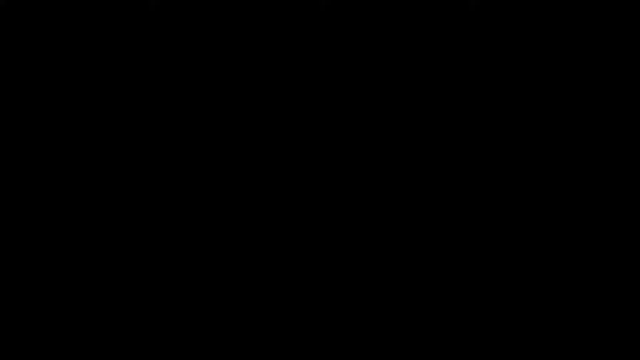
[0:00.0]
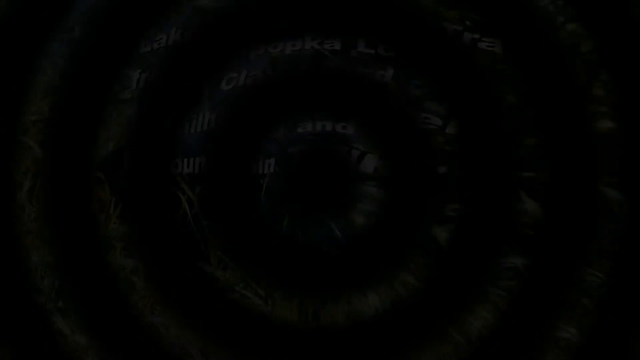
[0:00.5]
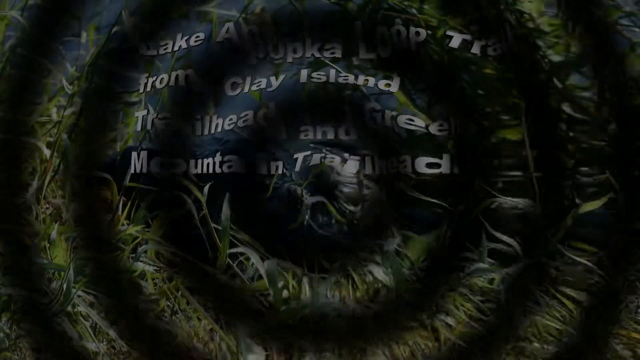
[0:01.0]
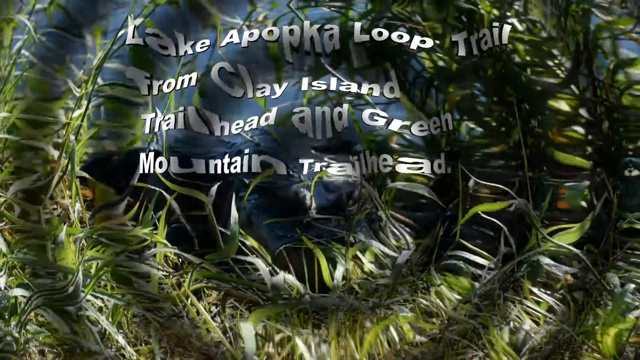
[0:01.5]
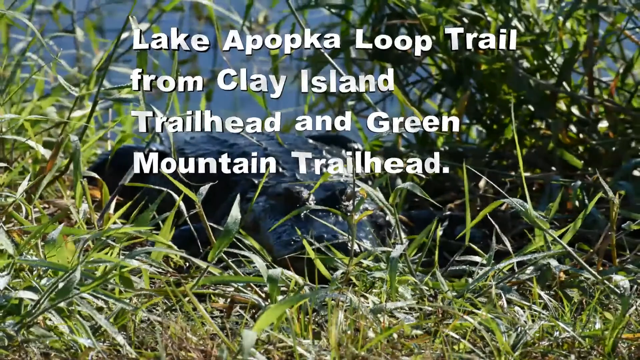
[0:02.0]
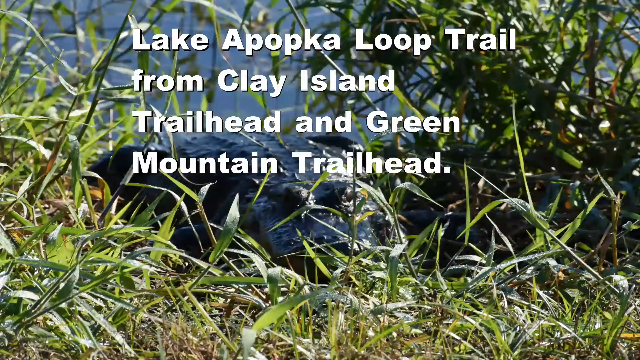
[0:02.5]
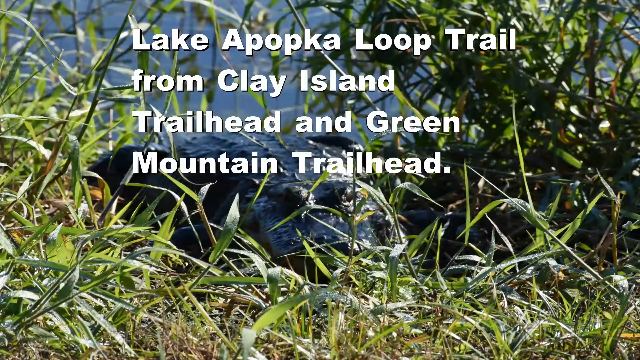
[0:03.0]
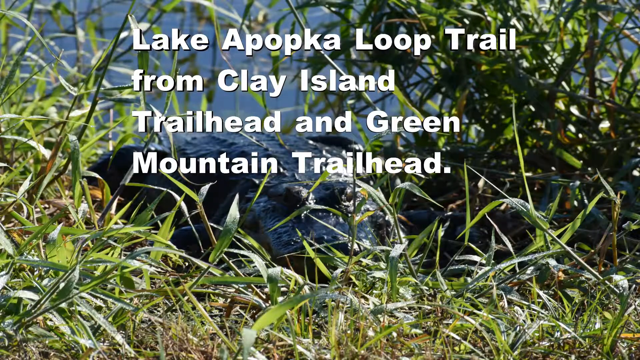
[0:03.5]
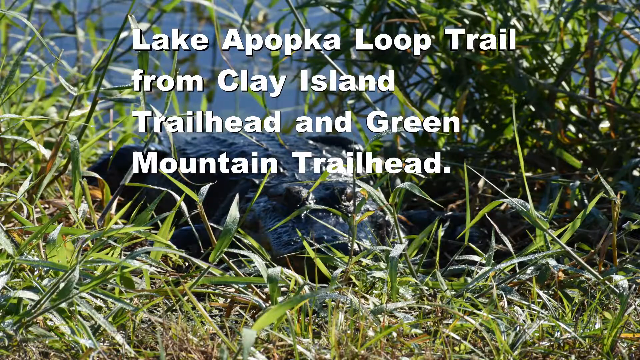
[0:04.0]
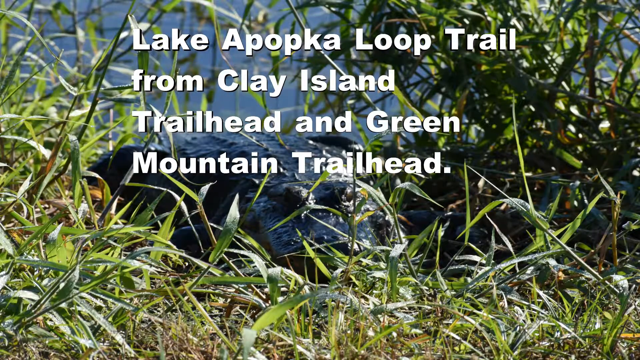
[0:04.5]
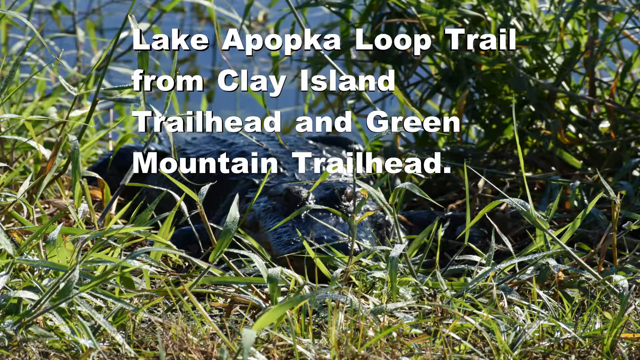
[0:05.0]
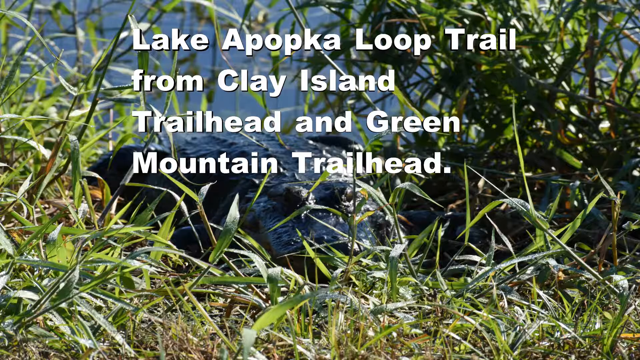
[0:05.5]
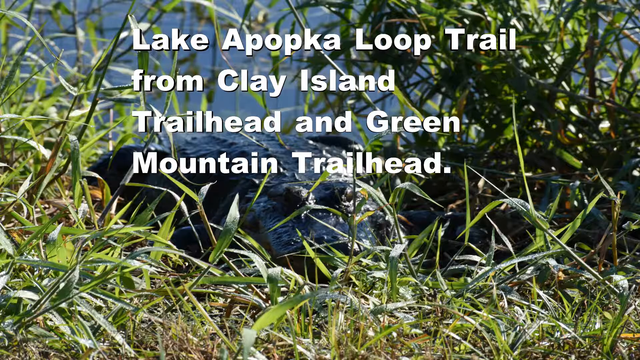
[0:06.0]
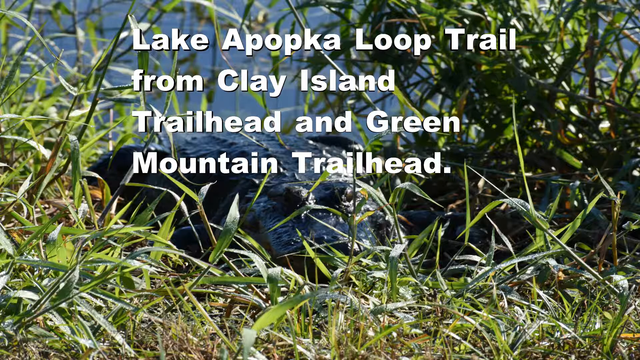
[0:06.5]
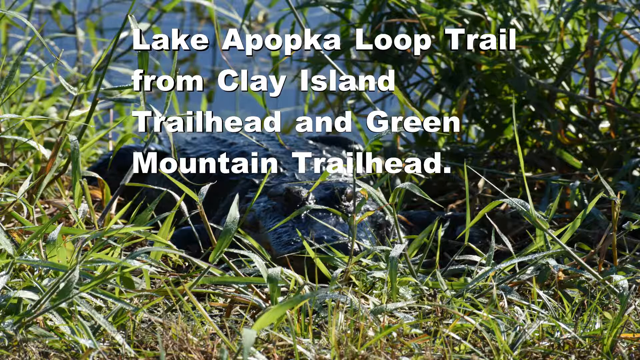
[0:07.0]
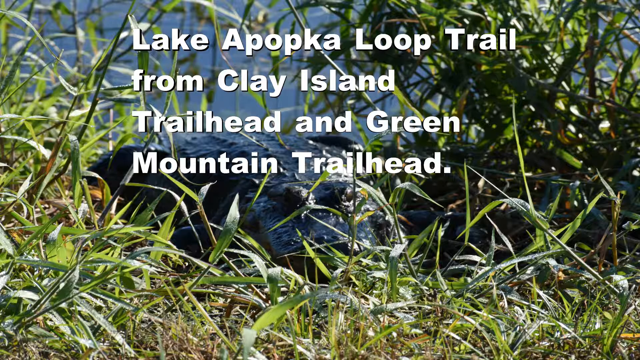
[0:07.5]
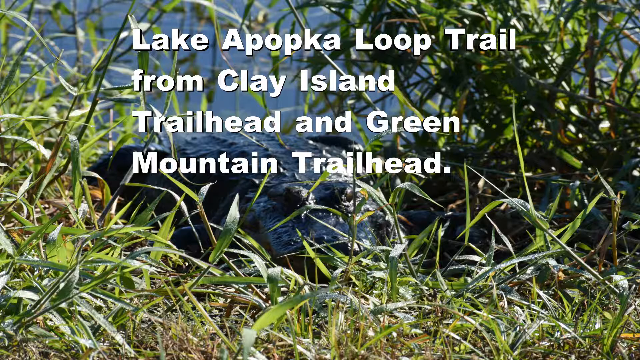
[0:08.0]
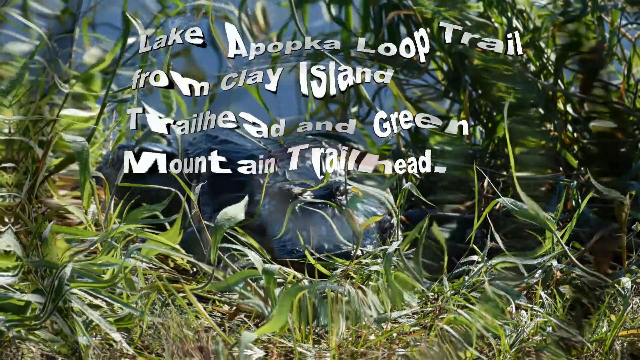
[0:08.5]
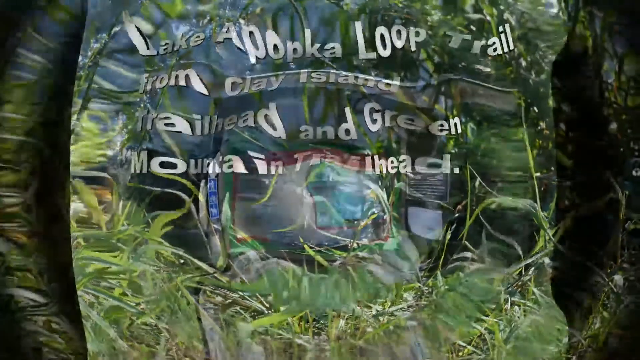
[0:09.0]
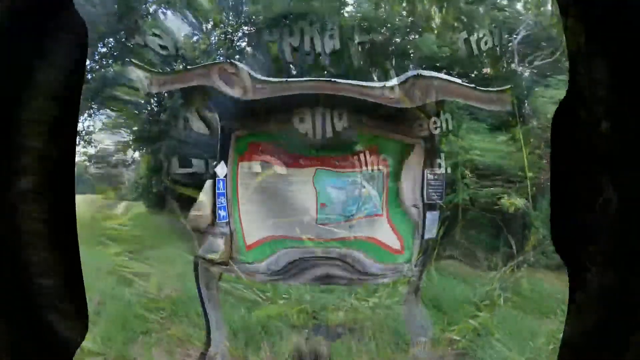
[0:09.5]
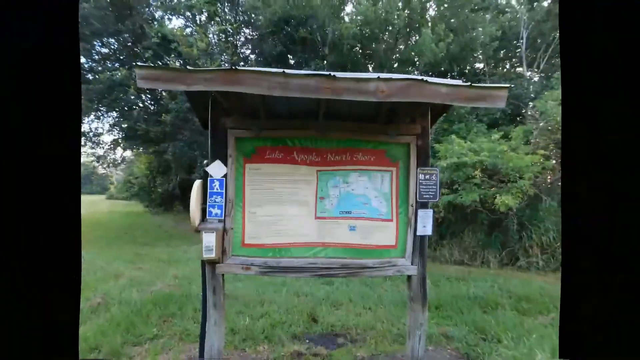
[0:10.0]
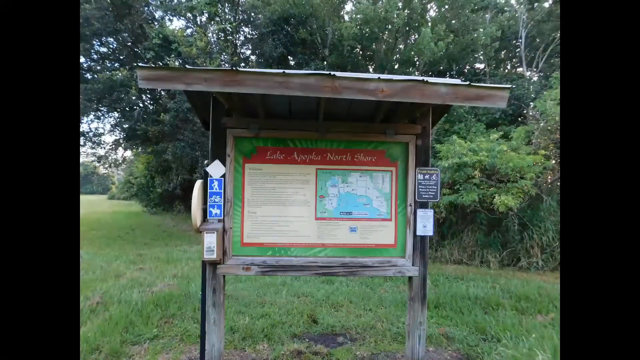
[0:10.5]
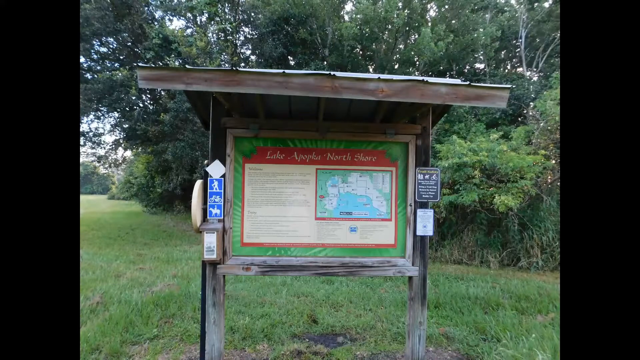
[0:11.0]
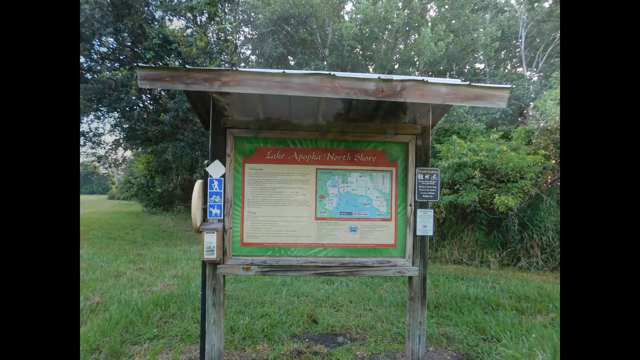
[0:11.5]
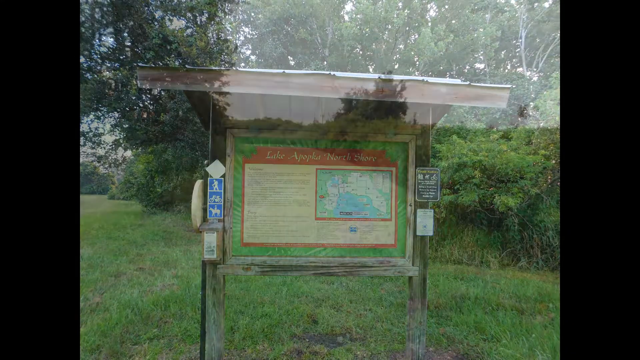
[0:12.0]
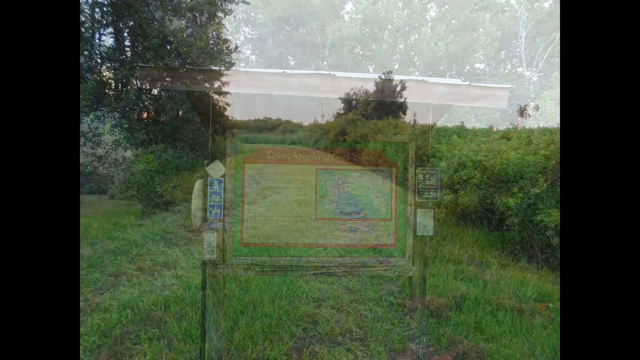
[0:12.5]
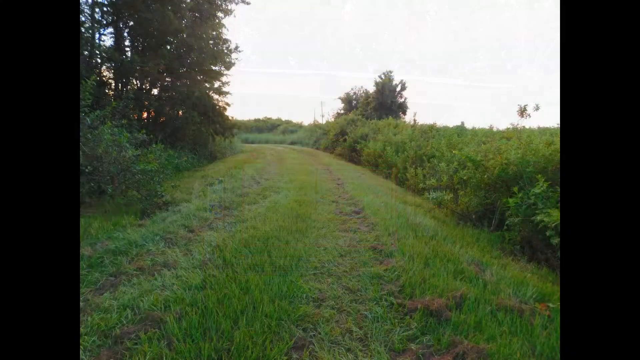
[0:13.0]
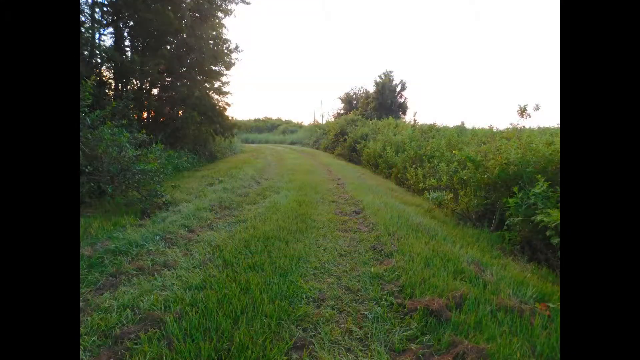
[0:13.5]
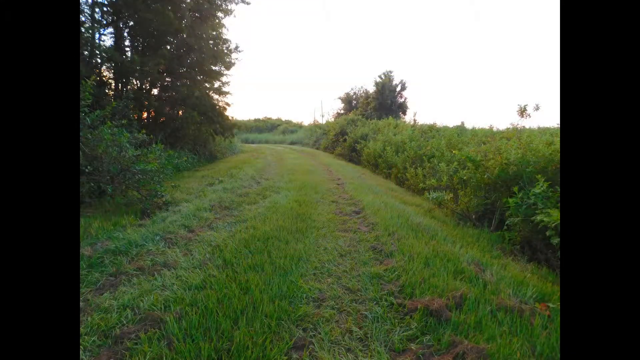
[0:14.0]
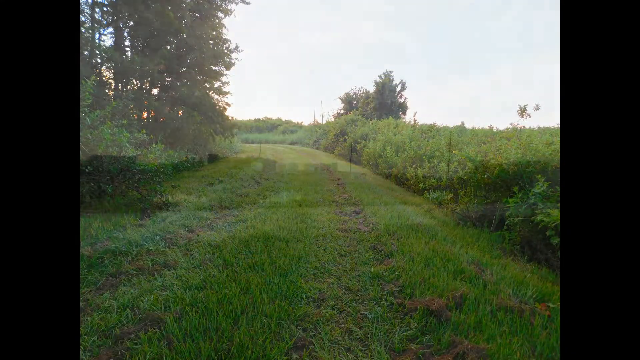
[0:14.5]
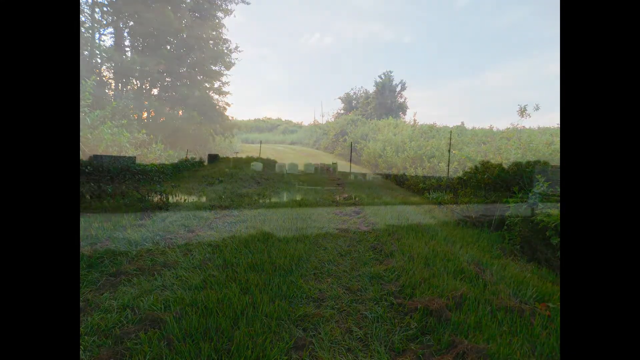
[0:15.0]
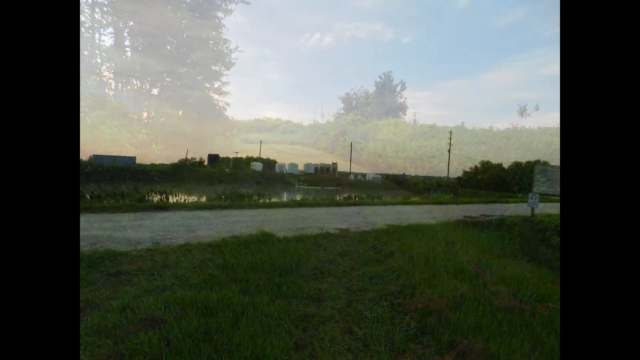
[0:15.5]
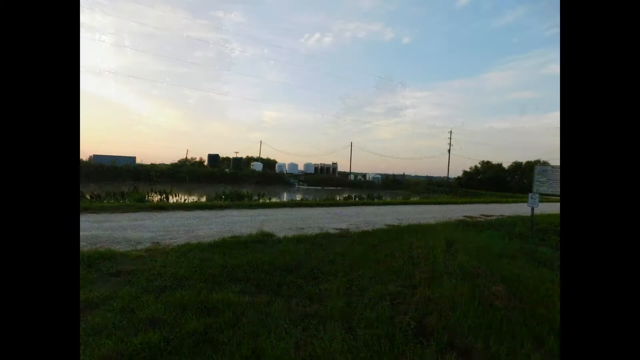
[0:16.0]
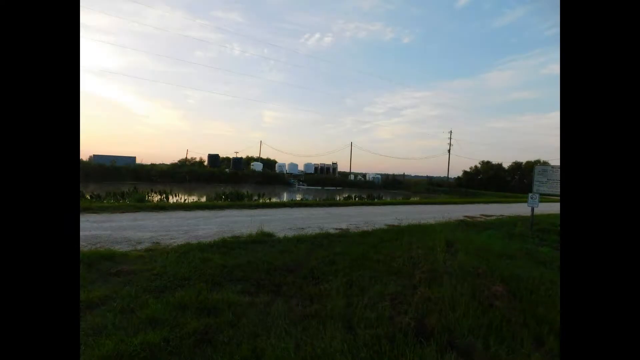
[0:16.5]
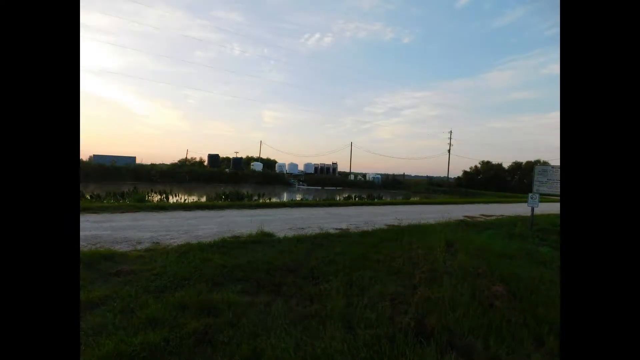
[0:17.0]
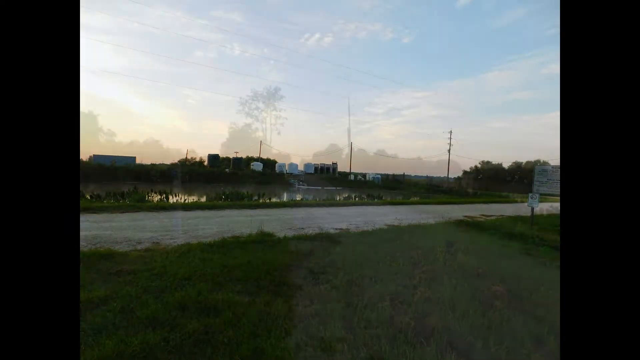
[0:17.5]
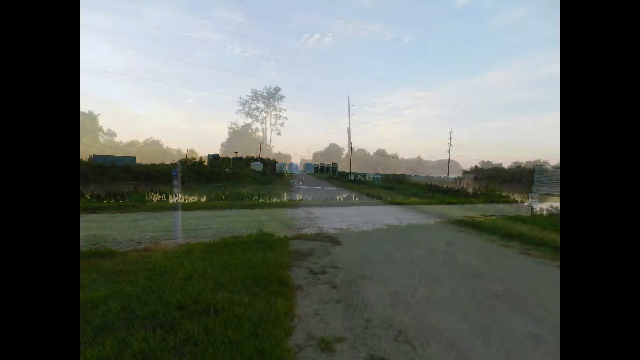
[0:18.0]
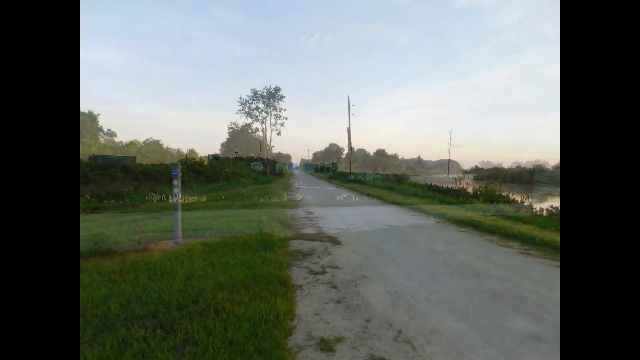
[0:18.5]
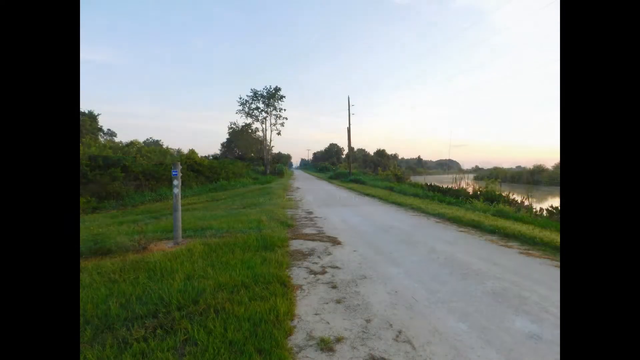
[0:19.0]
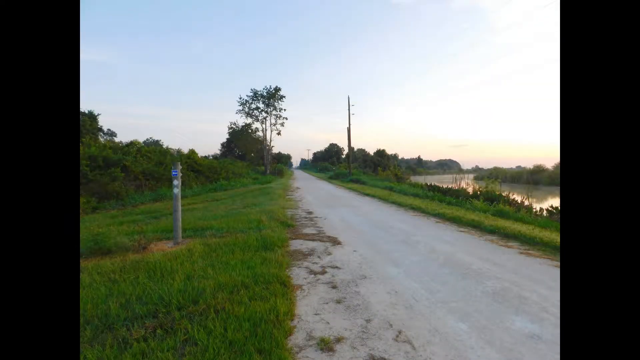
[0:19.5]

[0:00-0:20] The video starts on a black screen, then a ripple transition effect reveals the white words "Lake Apo Popka Loop Trail from Clay Island Trailhead and Green Mountain Trailhead" set against a photo of a marshy body of water surrounded by tall grasses. Another ripple effect changes the photo to a trailhead photo, and then to a green road surrounded by other greenery such as a field and trees. A shot of a river fades into a shot of a country road, and the images continue as a slideshow of several outdoor shots that transition fairly quickly from one photo to the next. All of the photos include some type of road, a blue sky, and a tree.